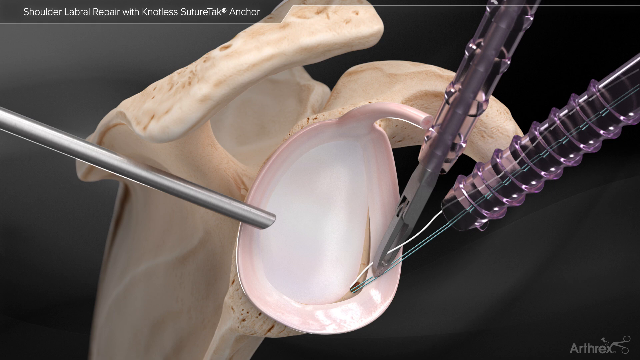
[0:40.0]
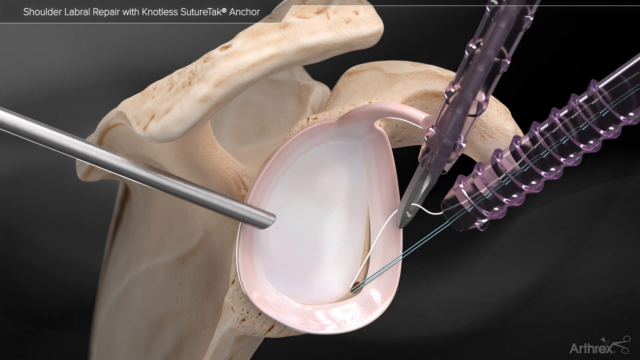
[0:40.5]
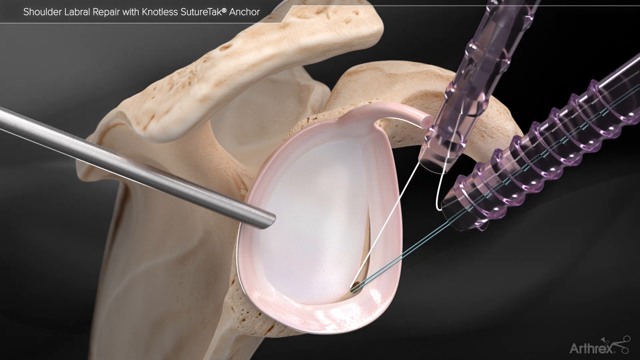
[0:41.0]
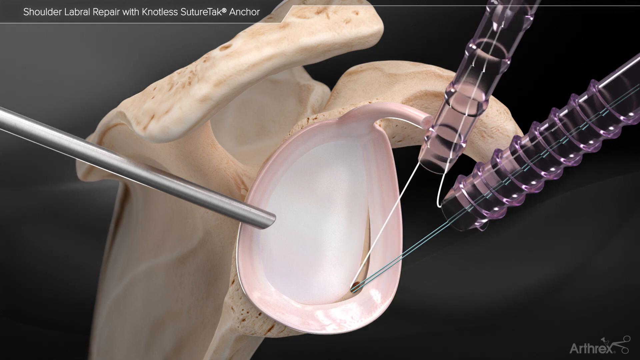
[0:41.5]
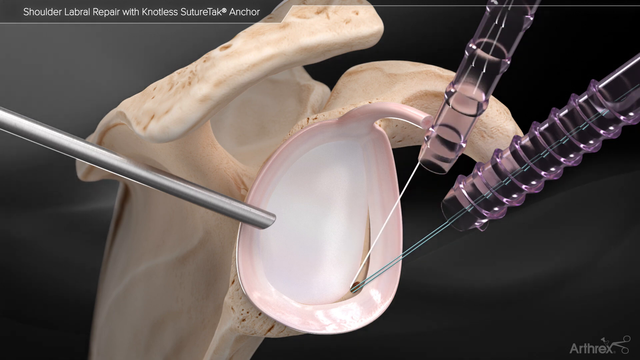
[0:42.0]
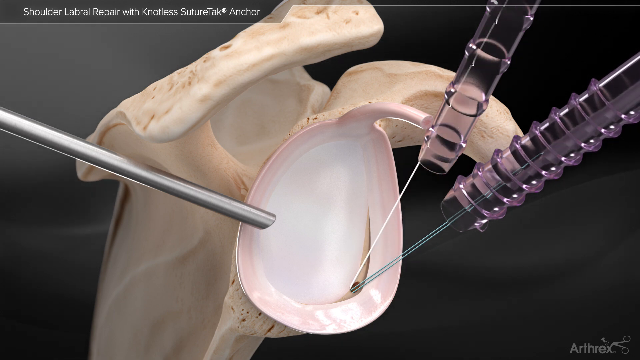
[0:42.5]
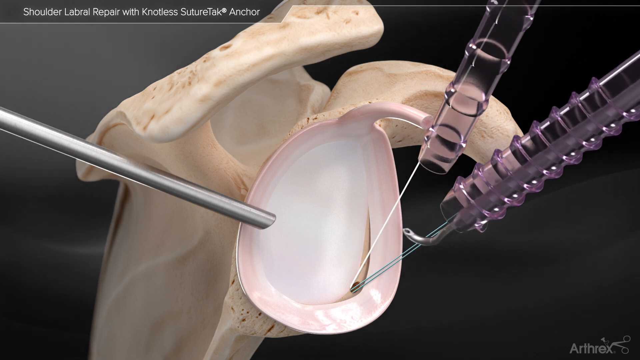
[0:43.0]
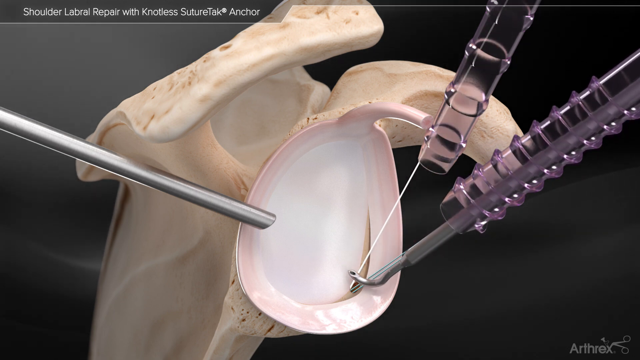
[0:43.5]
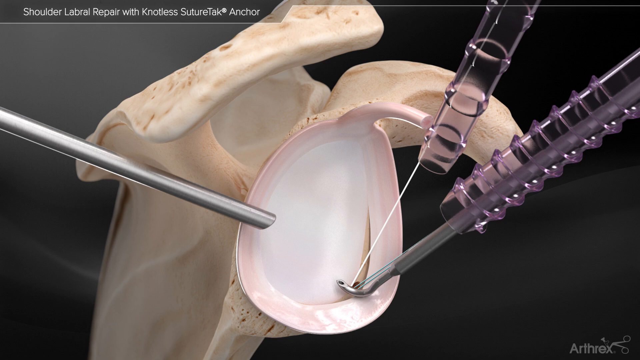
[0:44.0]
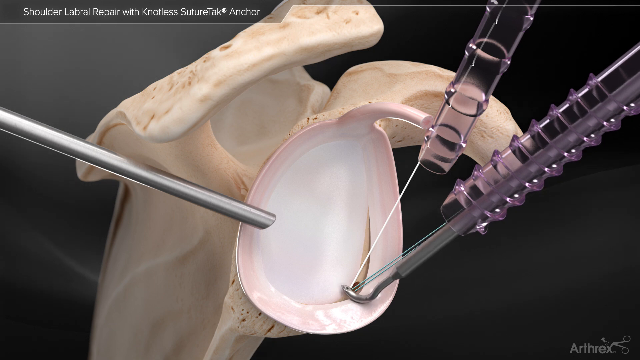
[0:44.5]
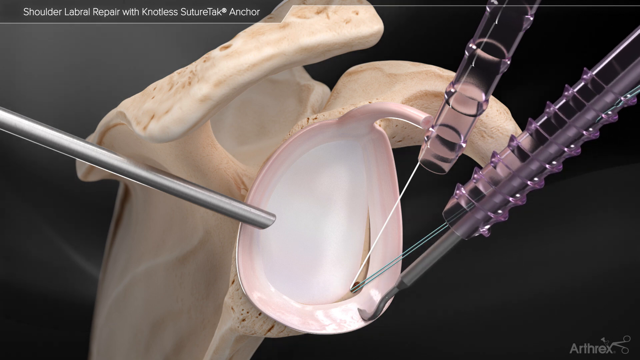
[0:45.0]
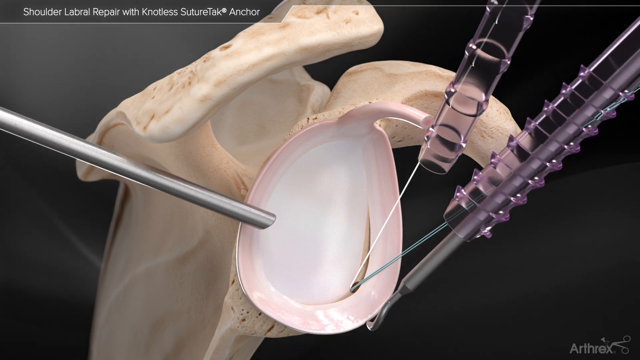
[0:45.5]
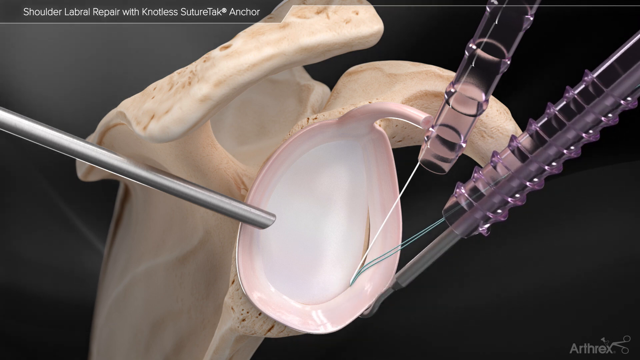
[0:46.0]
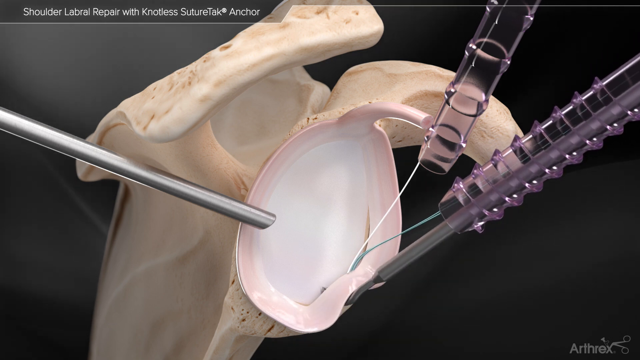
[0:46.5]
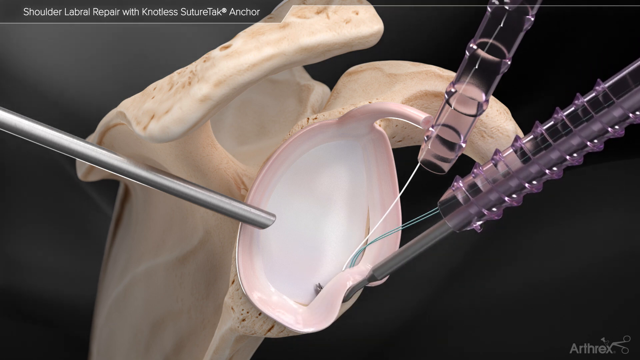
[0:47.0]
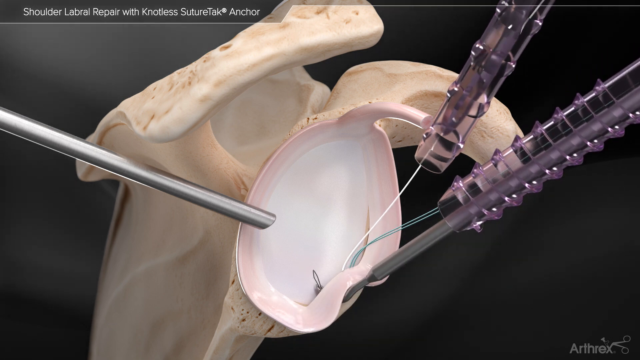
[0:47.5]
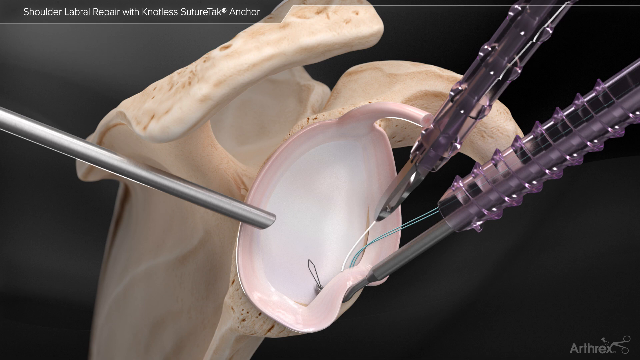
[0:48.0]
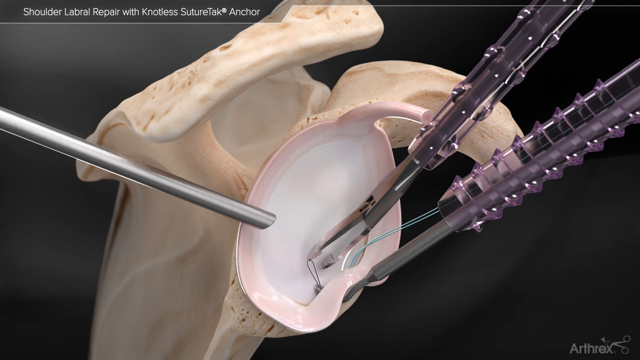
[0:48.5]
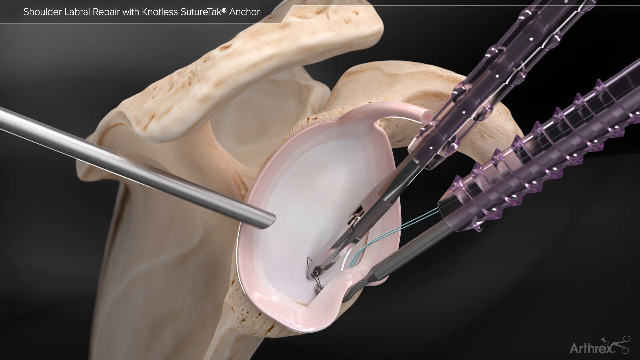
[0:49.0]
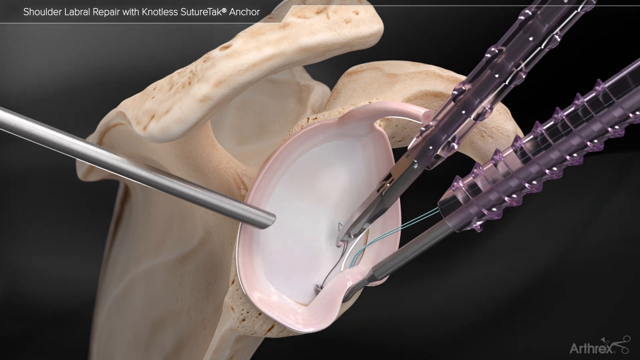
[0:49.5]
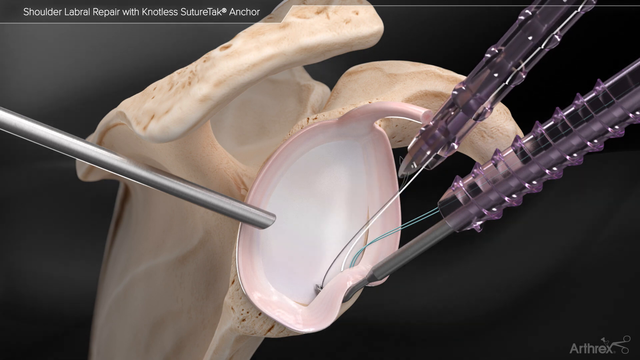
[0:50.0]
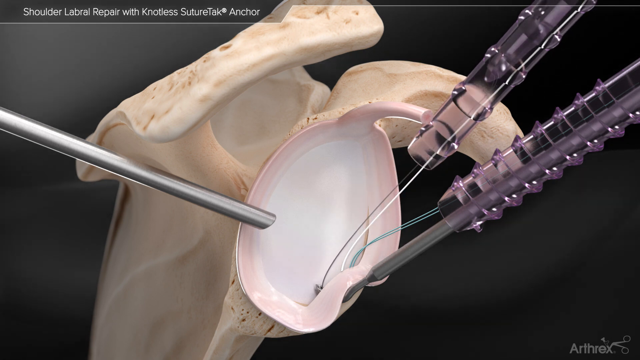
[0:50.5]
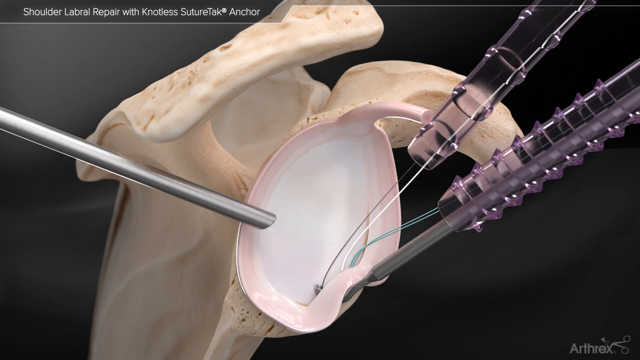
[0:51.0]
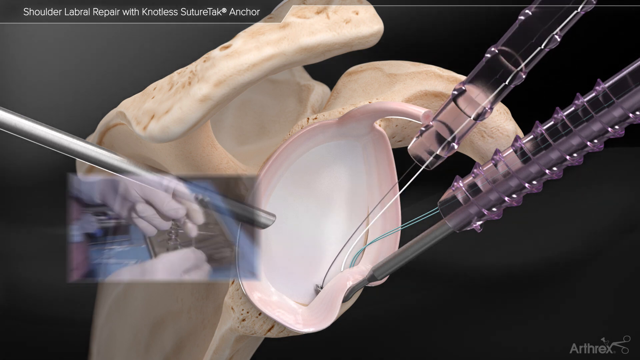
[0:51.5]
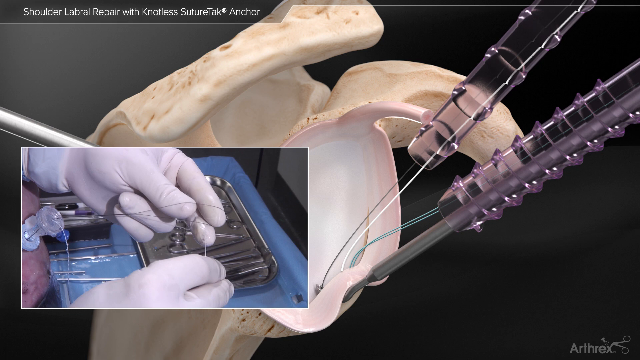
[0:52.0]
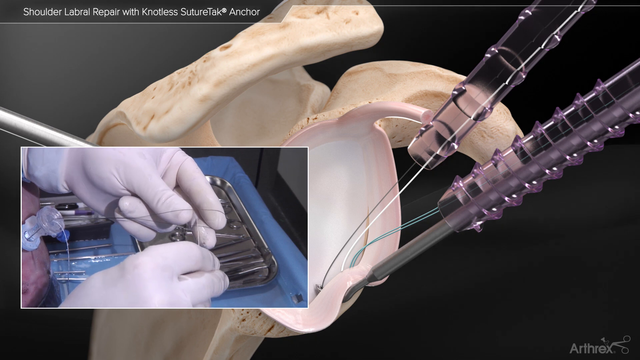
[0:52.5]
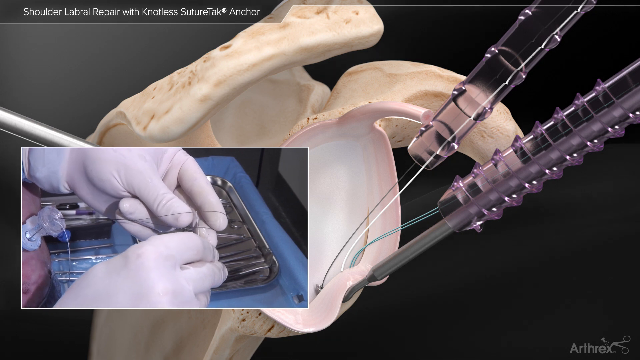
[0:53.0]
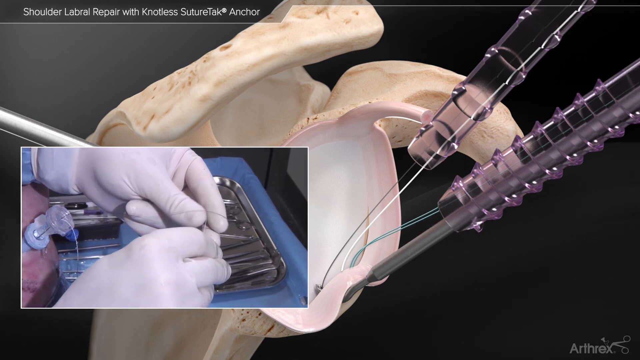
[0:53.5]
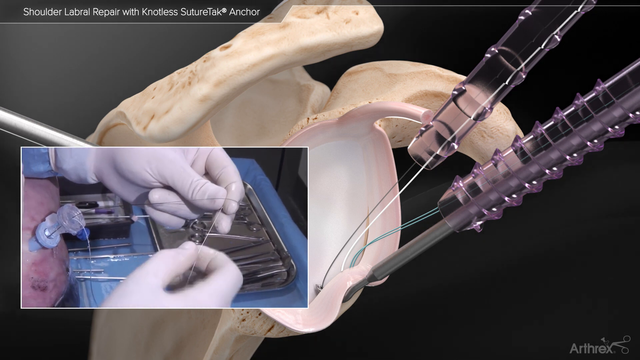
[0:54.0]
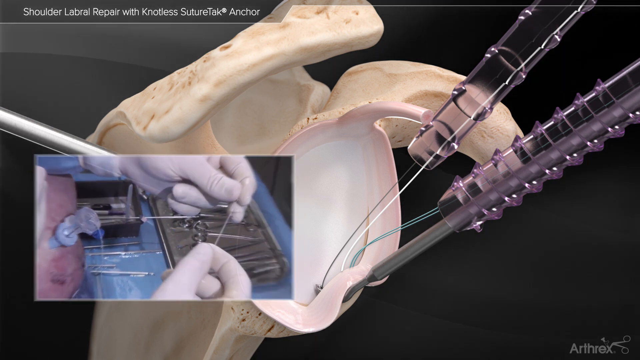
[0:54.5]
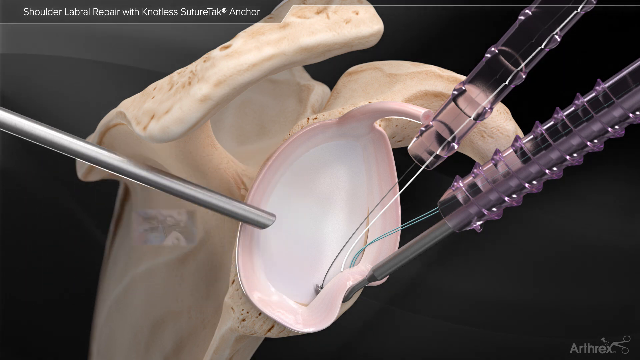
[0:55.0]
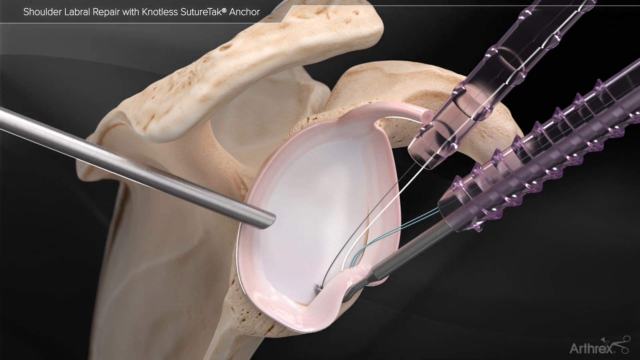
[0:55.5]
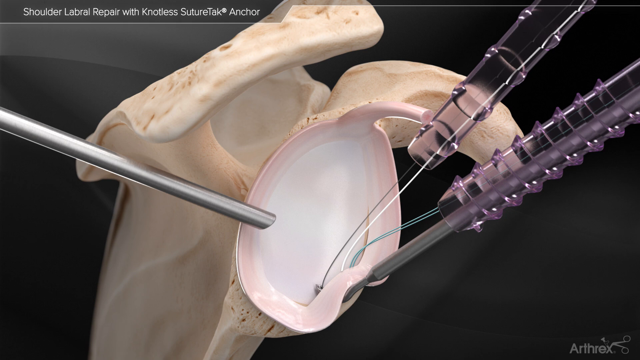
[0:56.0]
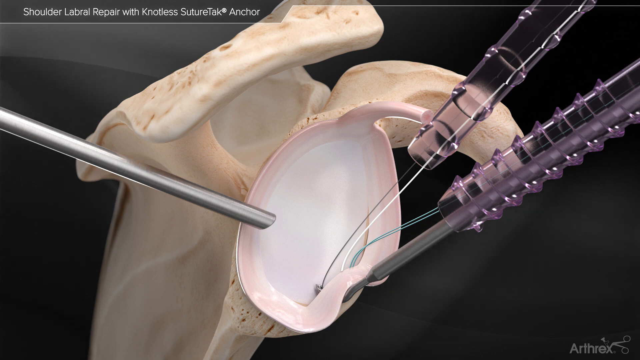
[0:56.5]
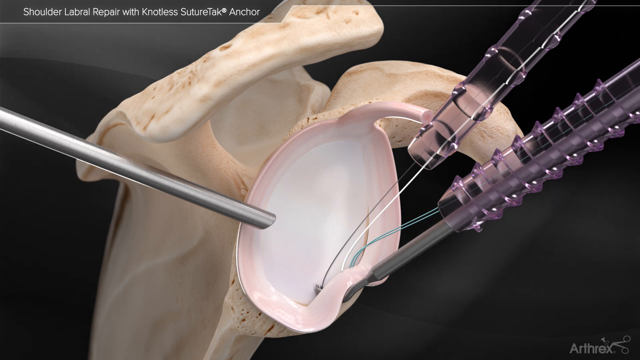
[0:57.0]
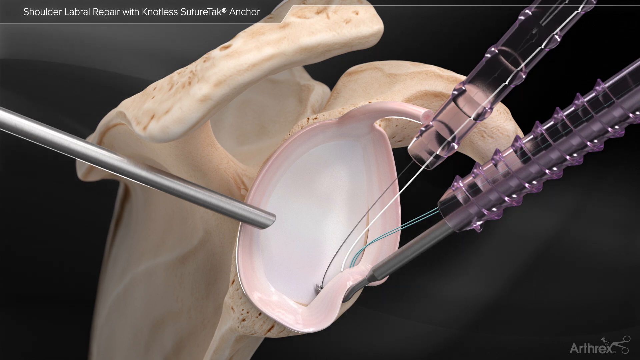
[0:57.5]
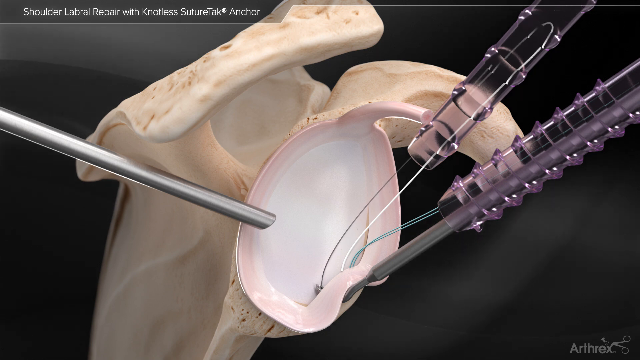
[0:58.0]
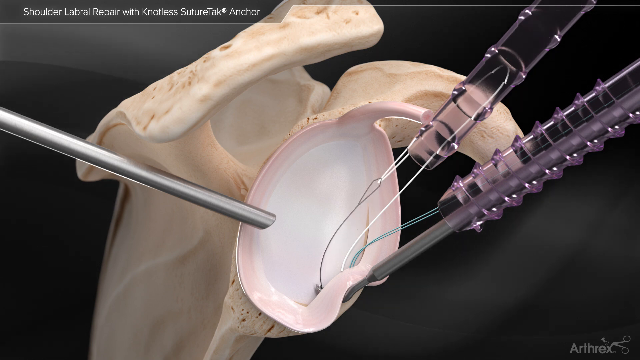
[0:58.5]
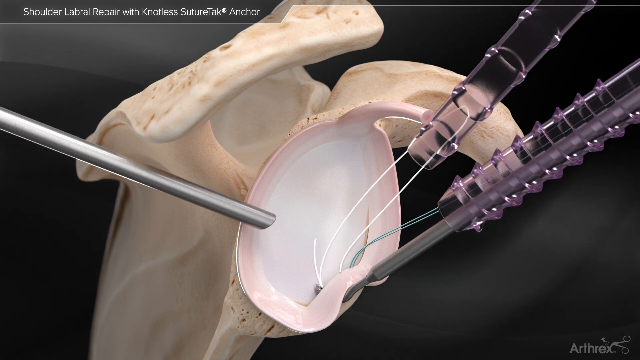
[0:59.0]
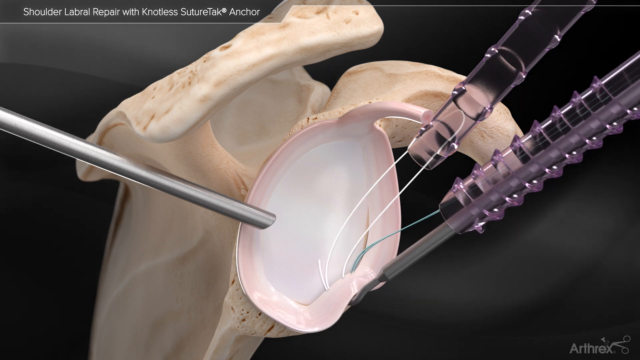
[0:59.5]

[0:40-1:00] Some type of bone or something unidentified is shown with two purple plastic pieces that look like plastic tubes. A string comes out of one tube, and in the other tube there is what looks like a metal piece or scissors, which are cutting or pulling the string coming out of the first tube. A plastic tube is then pulled to make it tight. In the other plastic tube, a metal J-looking piece comes down and gets under what is apparently a part of the bone or a lobe. A string comes out of that, and something in the other tube grabs the string and pulls it out the other side of the tube. It appears that stitches are being created with this device, possibly without fully cutting the person open.